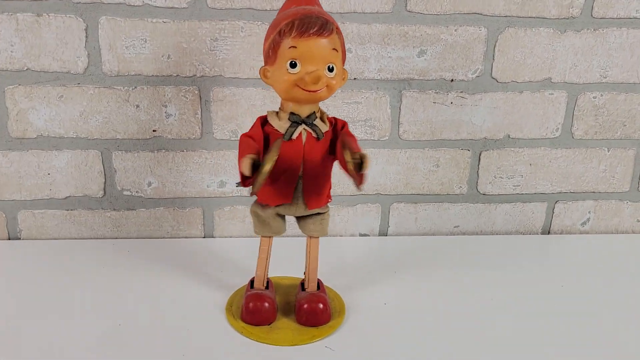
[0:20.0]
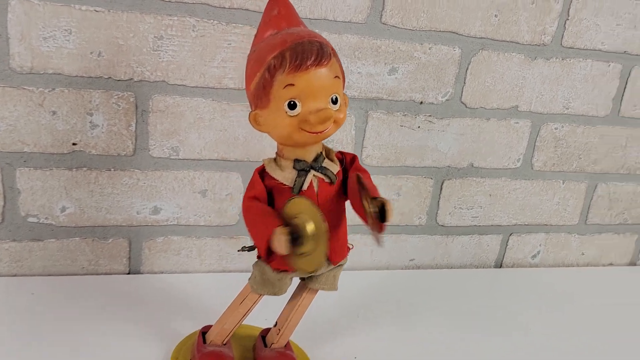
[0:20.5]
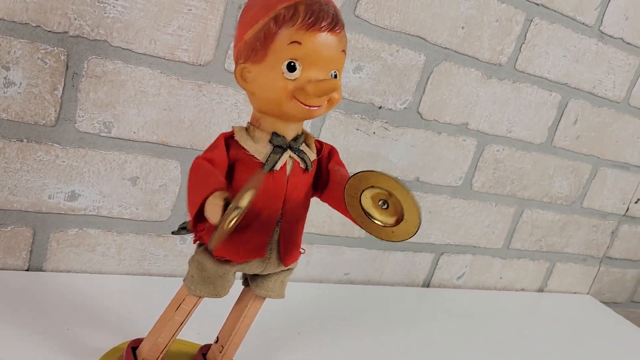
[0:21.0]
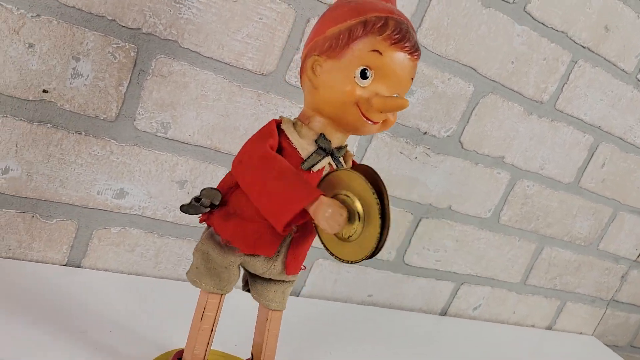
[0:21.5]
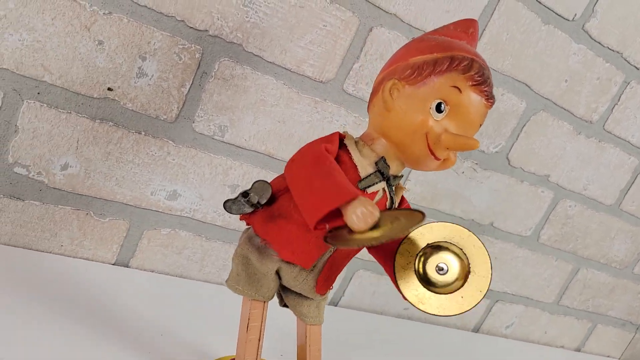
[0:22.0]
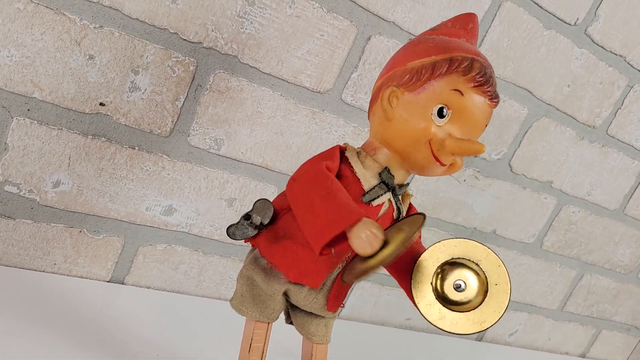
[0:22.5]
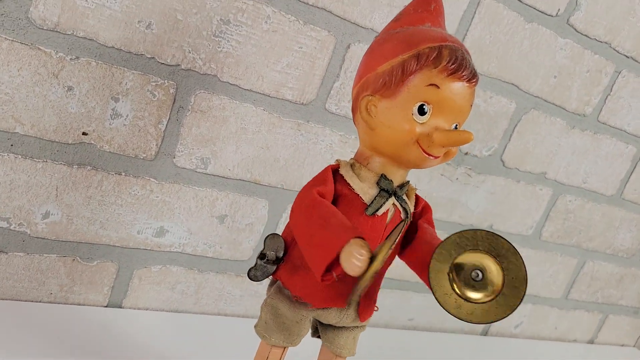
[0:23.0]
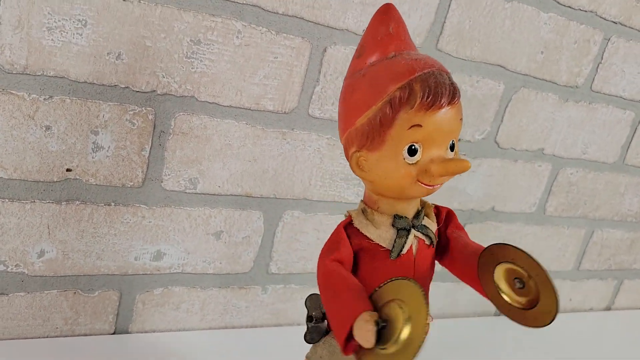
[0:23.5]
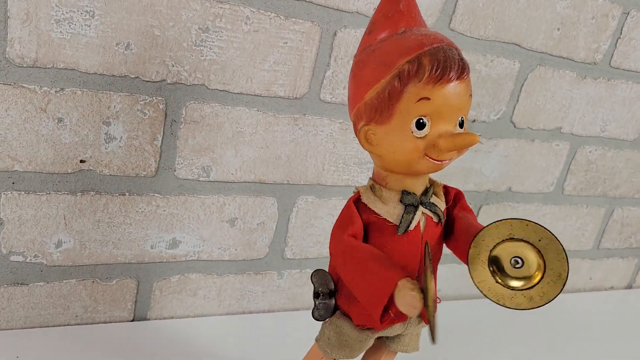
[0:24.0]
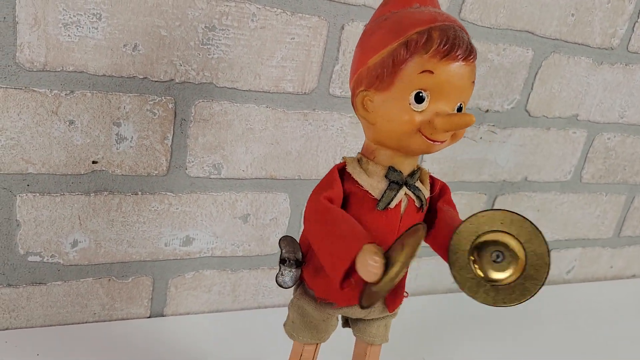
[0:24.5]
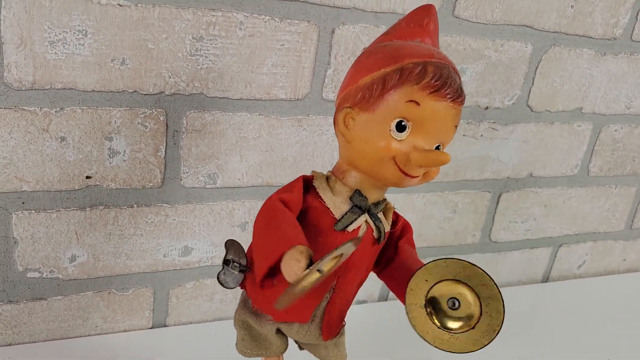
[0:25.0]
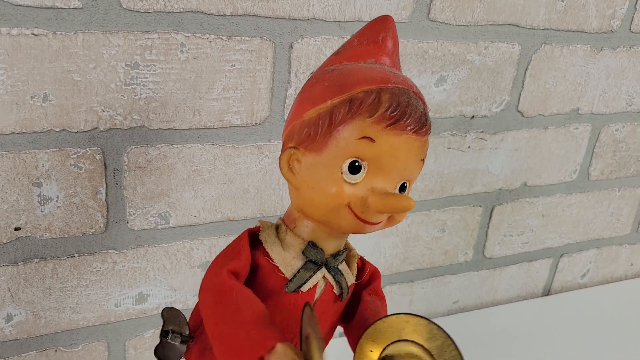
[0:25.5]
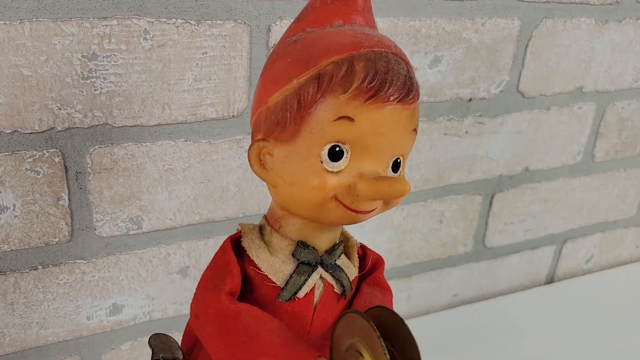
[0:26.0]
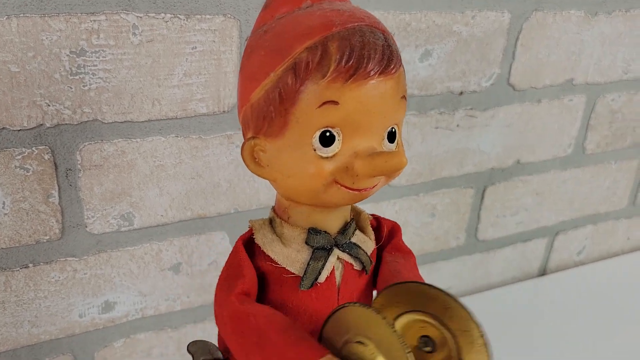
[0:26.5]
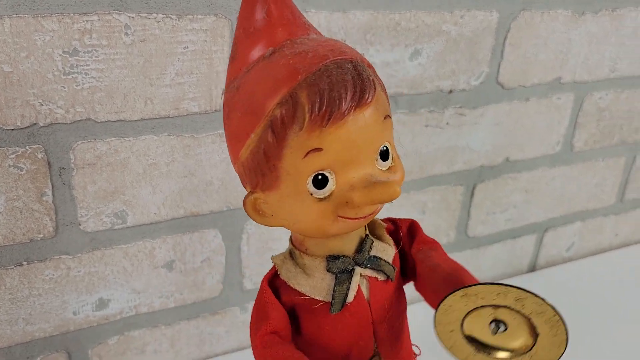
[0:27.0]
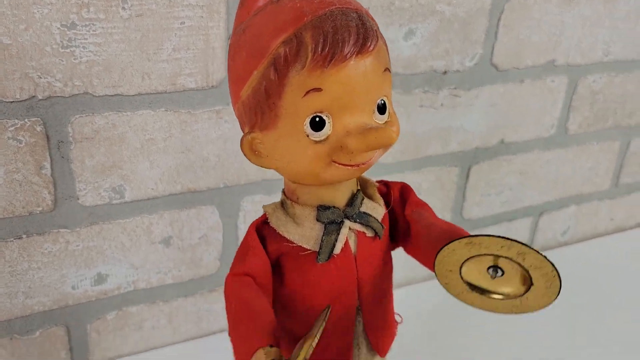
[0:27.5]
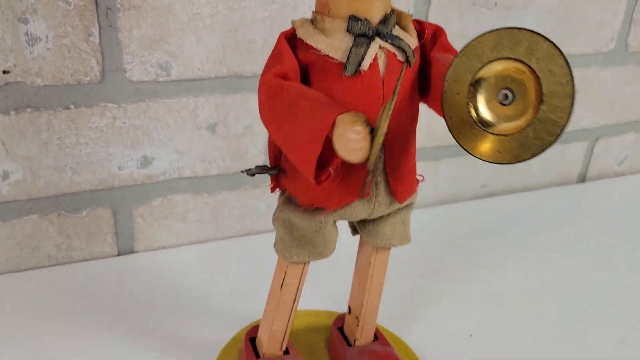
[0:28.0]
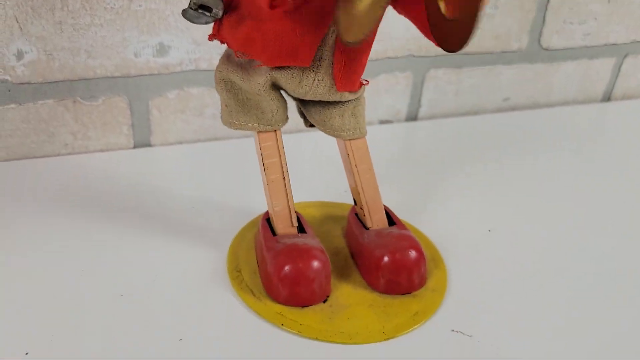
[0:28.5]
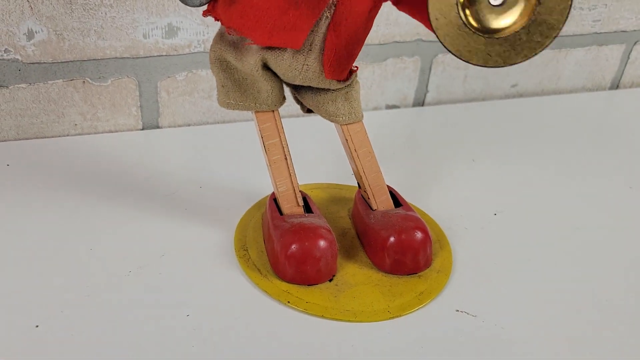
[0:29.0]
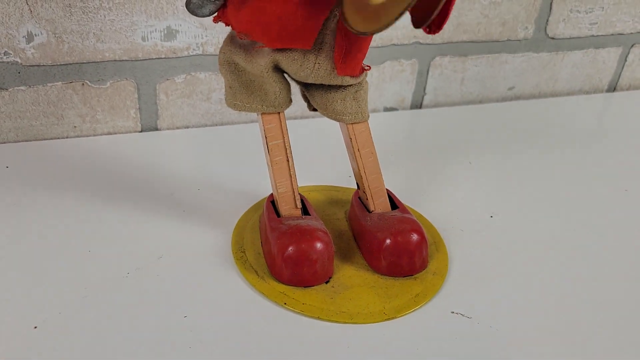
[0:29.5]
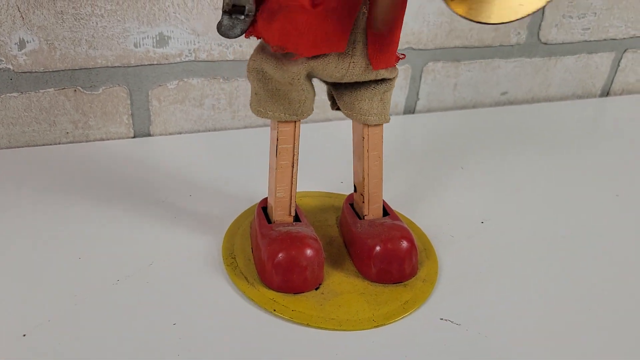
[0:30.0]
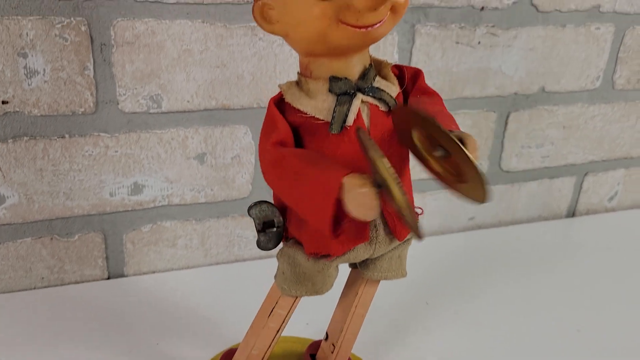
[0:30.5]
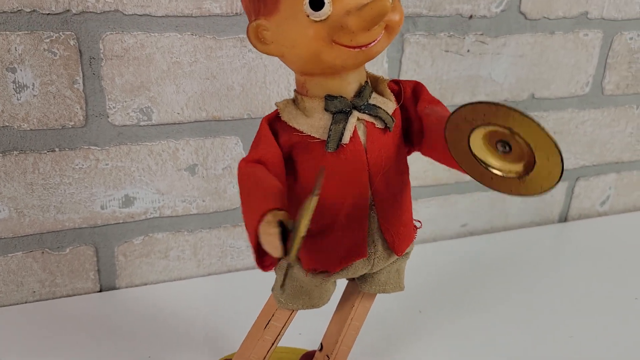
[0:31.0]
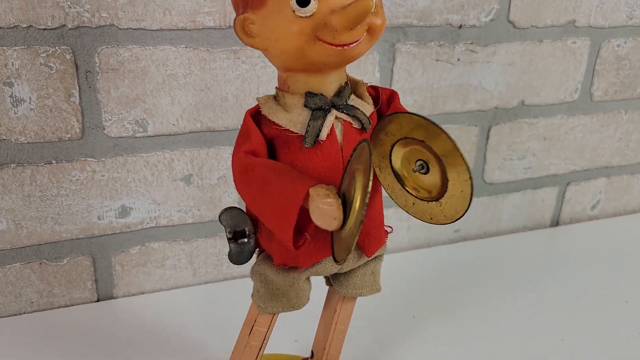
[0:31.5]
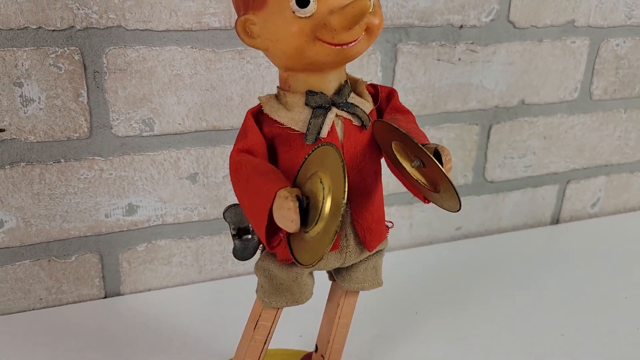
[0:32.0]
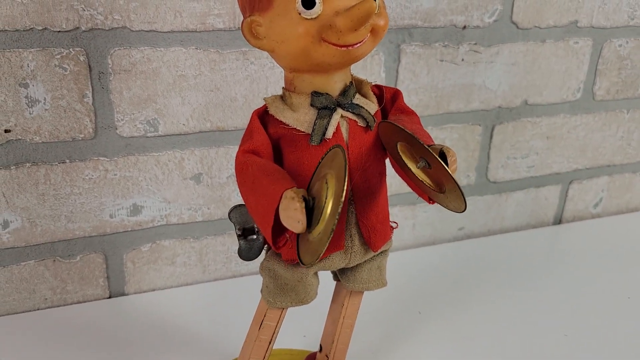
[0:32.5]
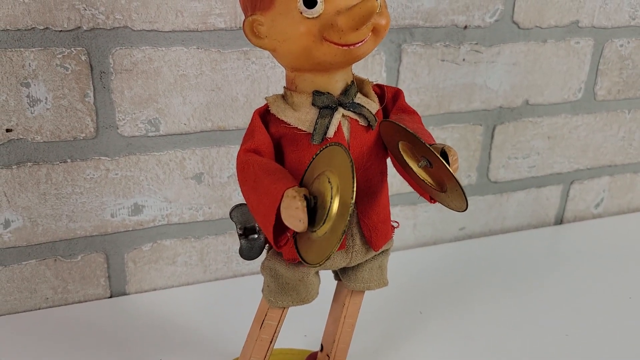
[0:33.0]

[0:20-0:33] A wind-up toy is standing on a white table that is very close to a brick wall, with concrete in between the several beige bricks. The boy figure wears a funny red pointed hat and has reddish brown hair. His shoes are way too big for him and look like red clown shoes. He is banging together metal cymbals. A wind-up on the side of his body keeps the toy going back and forth, and the toy moves its hips a lot. He has a black bowtie around his neck and a very long nose that looks like he could be Pinocchio. He has a smiling expression with no teeth visible and wears a red jacket that is slightly opened.